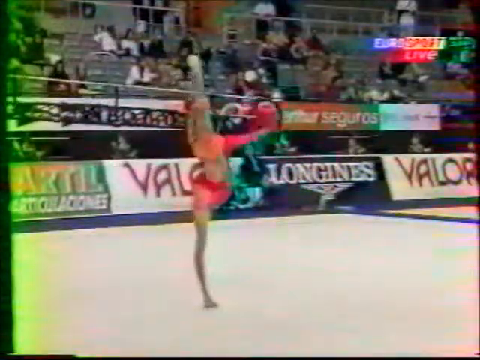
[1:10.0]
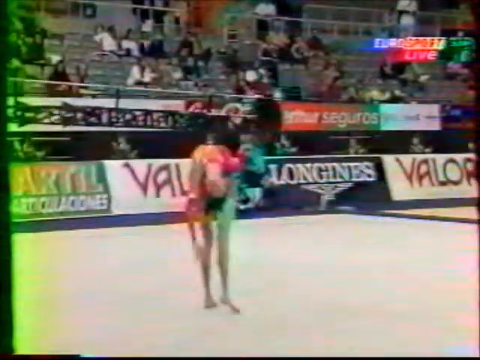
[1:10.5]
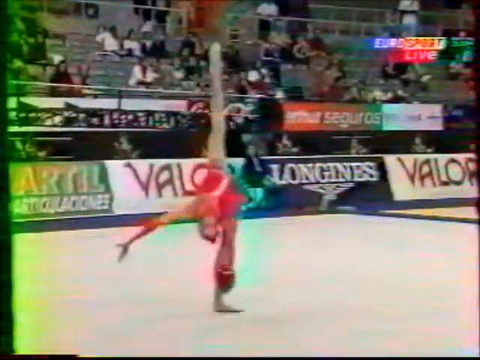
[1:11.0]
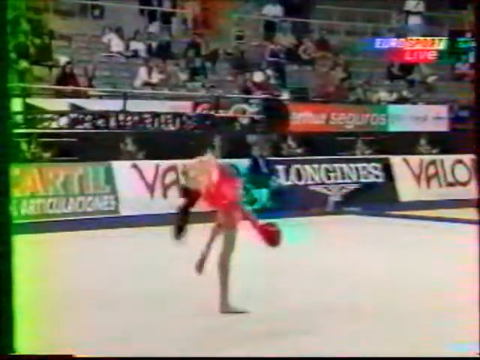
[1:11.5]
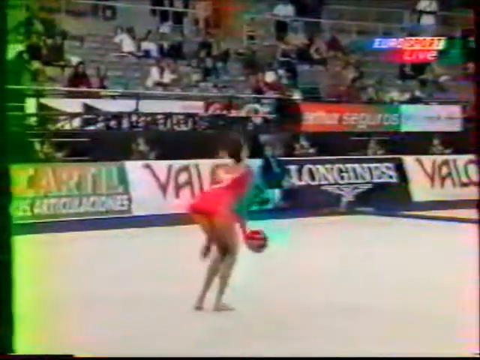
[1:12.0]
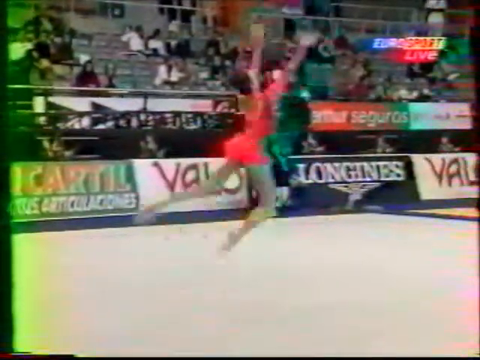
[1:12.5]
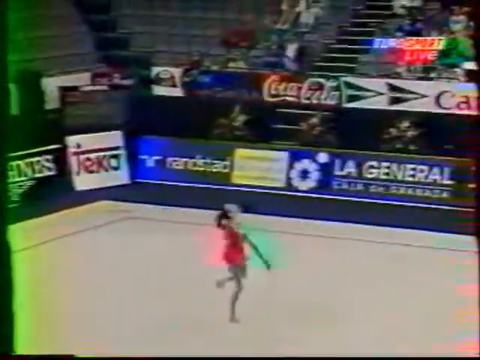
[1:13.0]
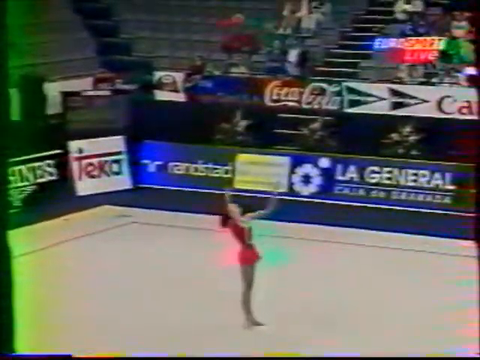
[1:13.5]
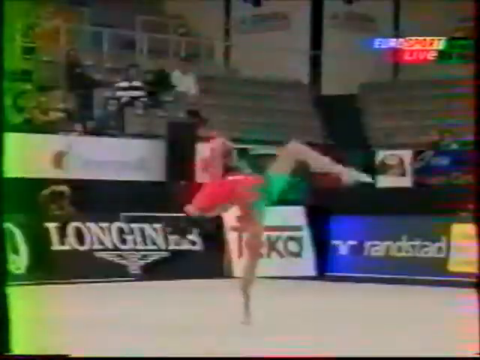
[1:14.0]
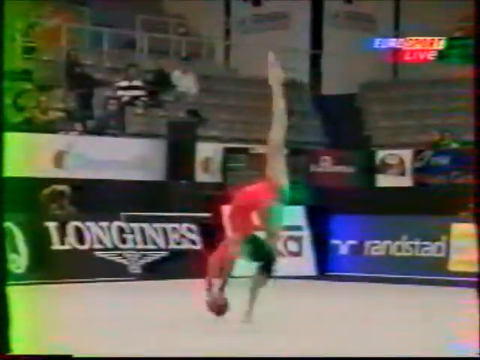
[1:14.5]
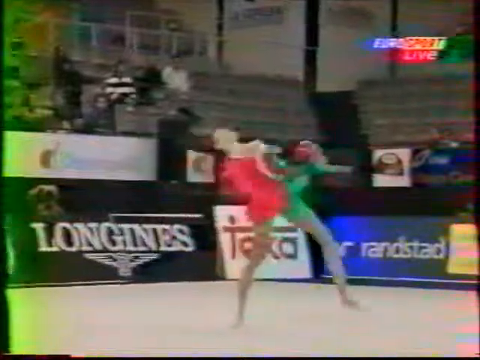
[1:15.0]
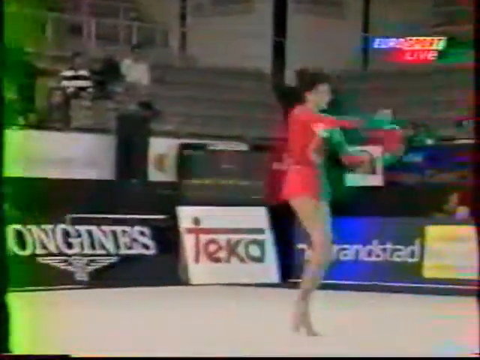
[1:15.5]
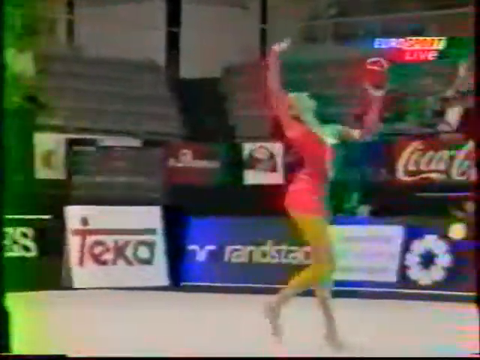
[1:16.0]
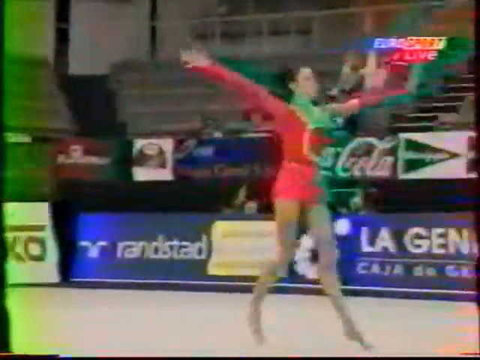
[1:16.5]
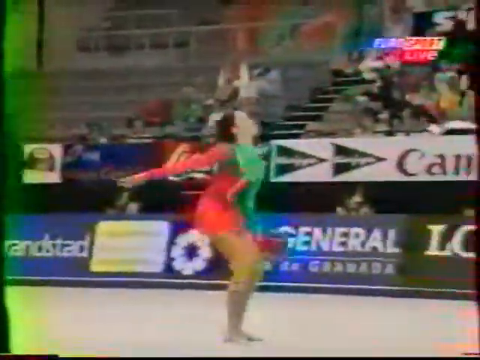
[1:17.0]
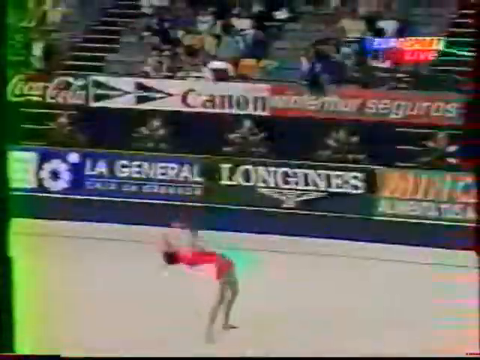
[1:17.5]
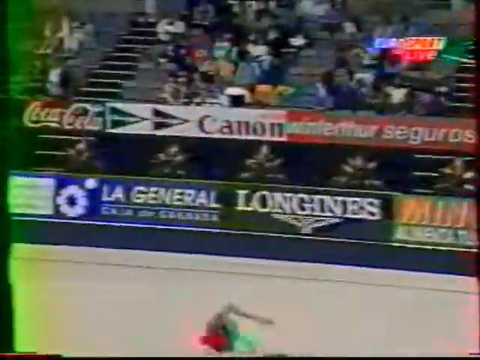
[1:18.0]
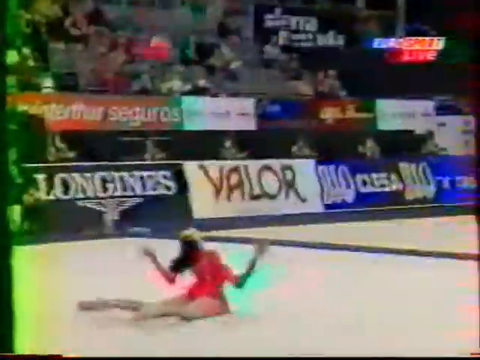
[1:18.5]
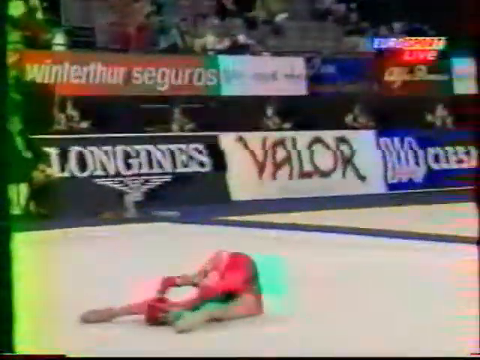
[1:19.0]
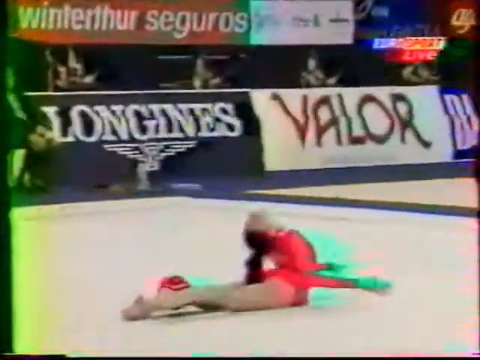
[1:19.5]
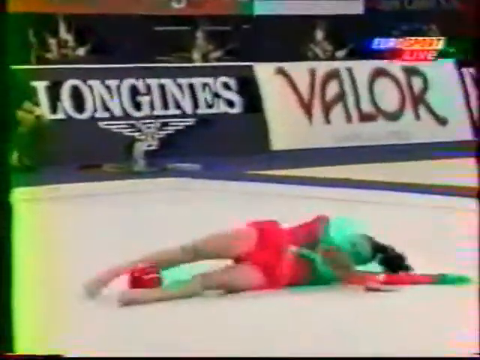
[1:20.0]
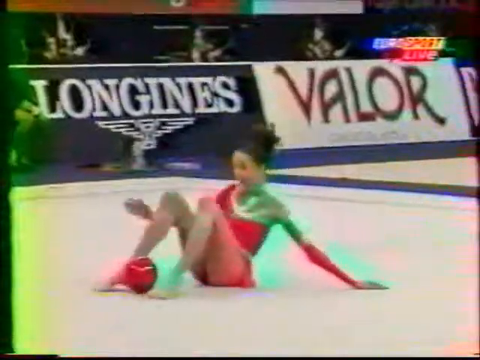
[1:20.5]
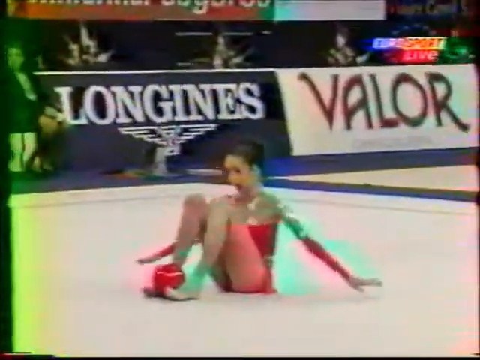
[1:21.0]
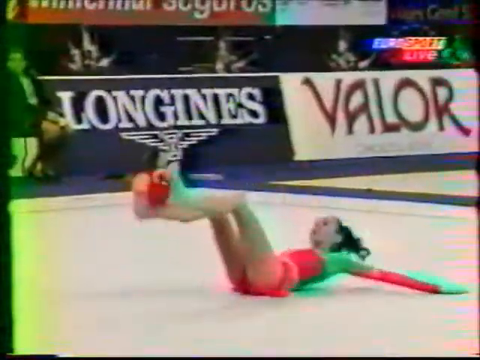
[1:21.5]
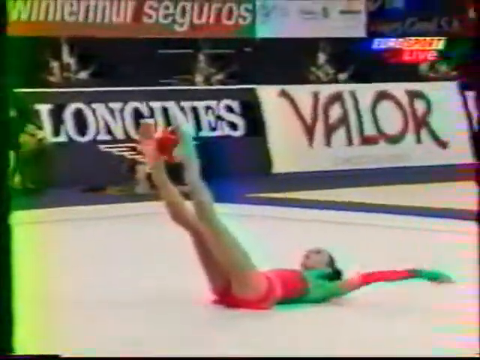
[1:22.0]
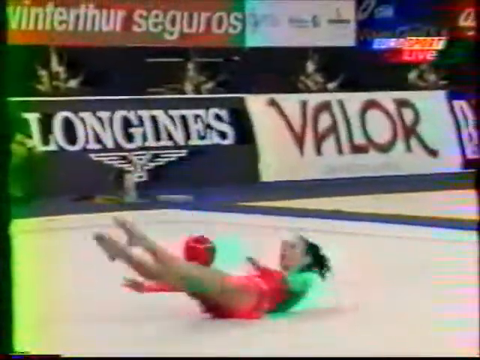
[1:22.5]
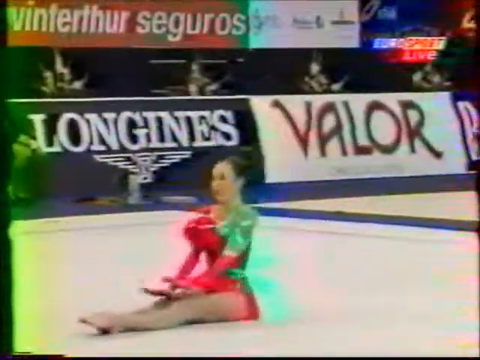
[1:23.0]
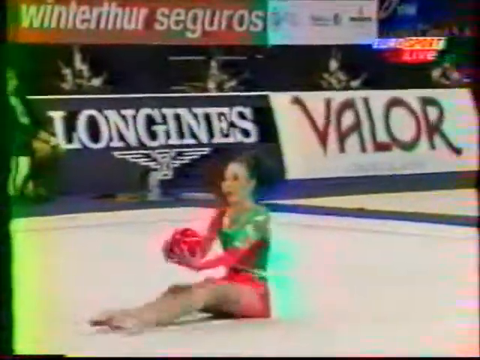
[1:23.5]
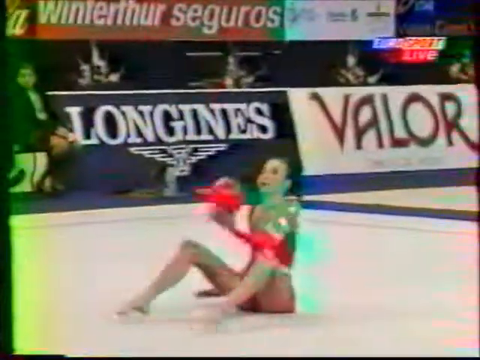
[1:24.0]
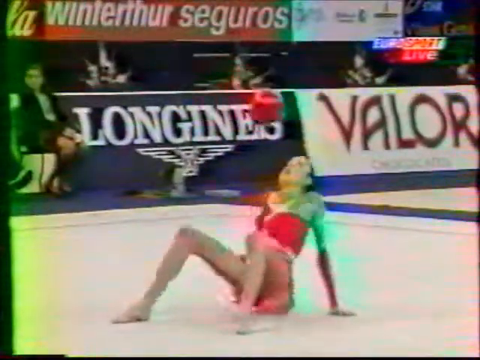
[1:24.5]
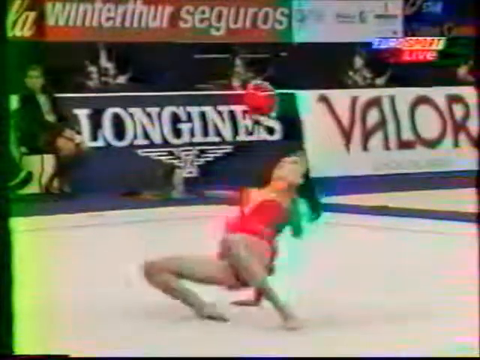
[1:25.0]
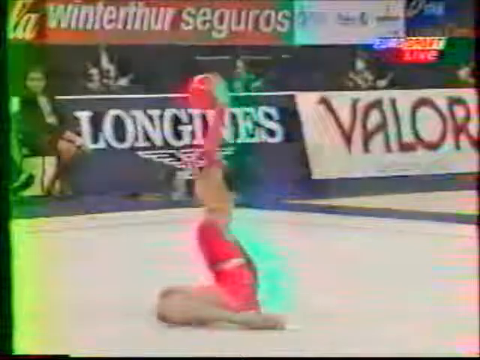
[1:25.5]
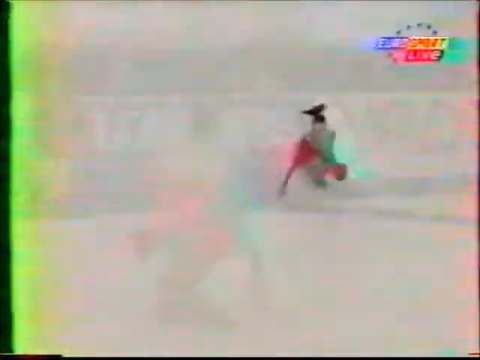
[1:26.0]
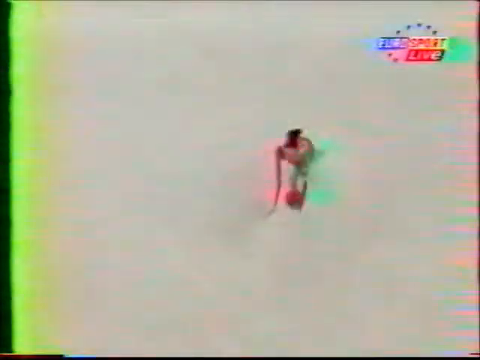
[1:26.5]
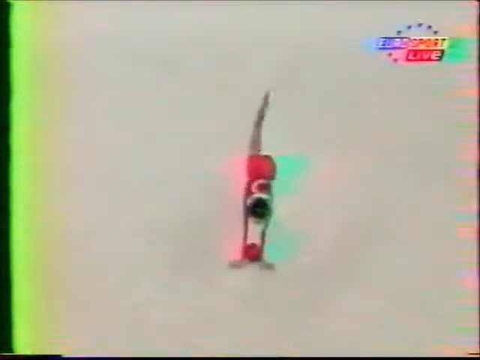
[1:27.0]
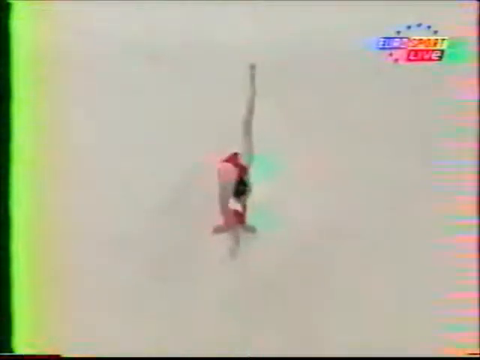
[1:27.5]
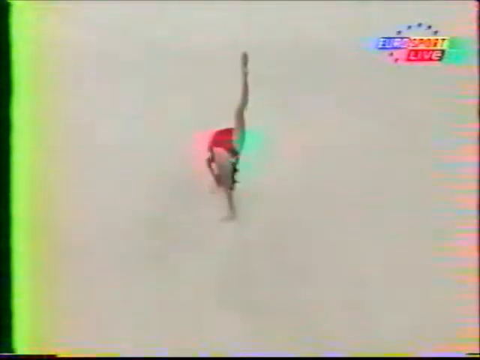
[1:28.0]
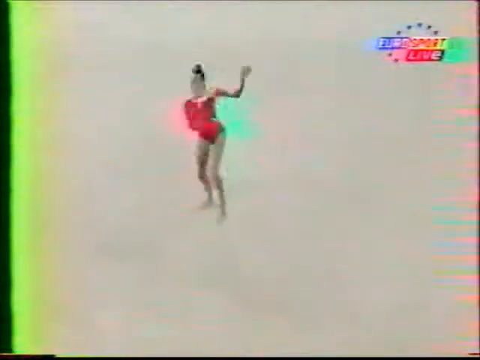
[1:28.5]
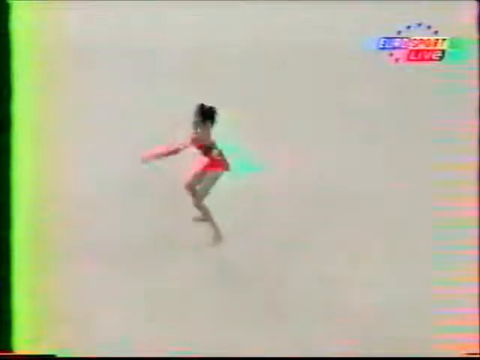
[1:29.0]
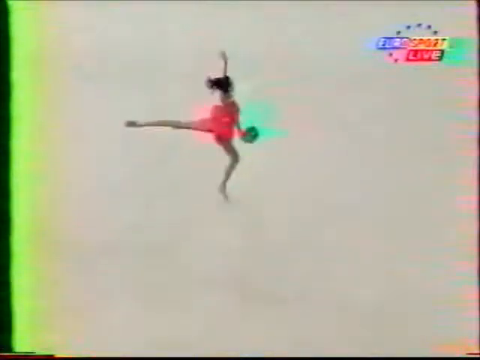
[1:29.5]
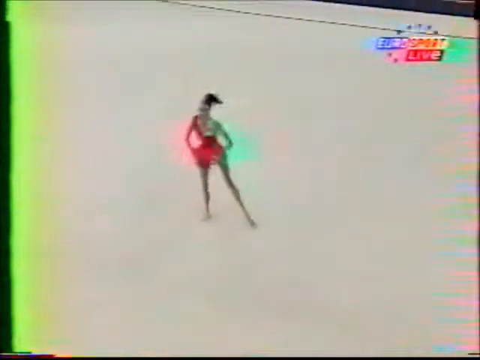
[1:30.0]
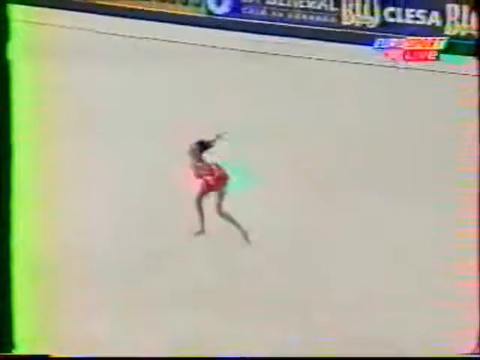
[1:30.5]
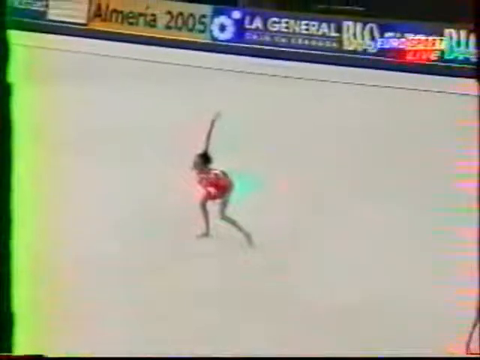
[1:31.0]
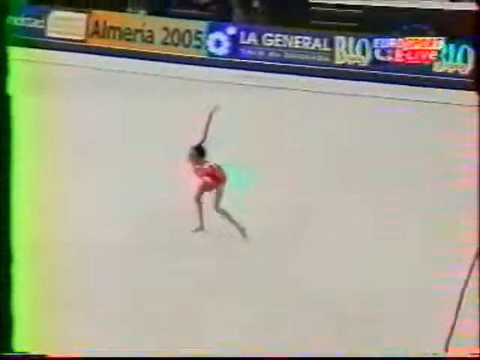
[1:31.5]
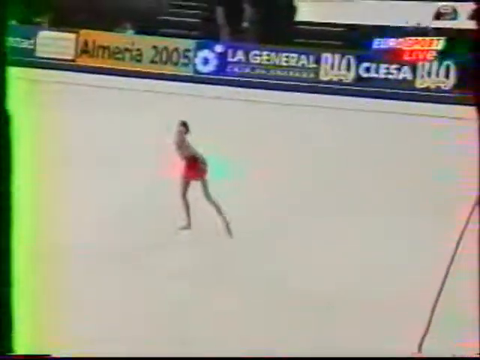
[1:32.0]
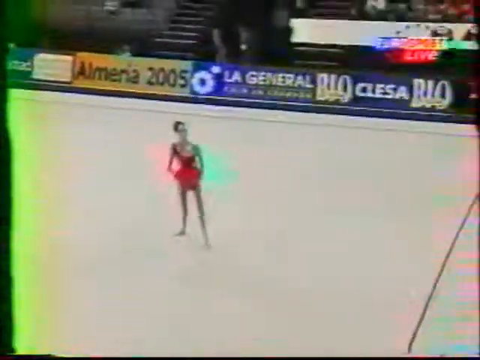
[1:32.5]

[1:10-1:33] The woman in a red outfit with black hair holds a red ball. She starts with one leg up in the air behind her, then kicks one leg forward. She jumps, throws the ball up, catches it and kicks one leg up in the air. She moves forward, gesturing her arms out while holding the ball. She throws it up in the air again, jumps backwards, lands on the floor and catches the ball. She has the ball with her legs, bumps it against her belly, catches it, does a forward flip, leaps to the side and stands. In the background are various advertisements, stairs and some people in the crowd. The video is very grainy, with a lot of extra greens kind of highlighting everything. A Eurosports Live logo is in the top right corner. Her movements are graceful.